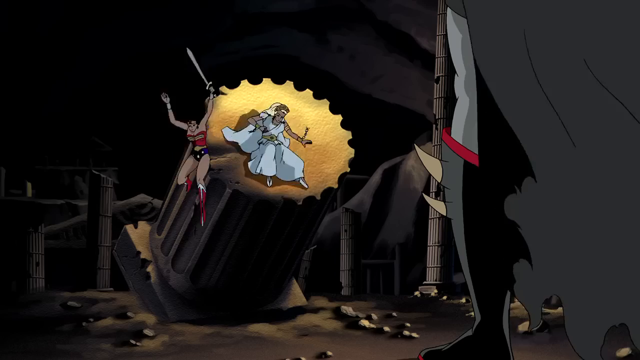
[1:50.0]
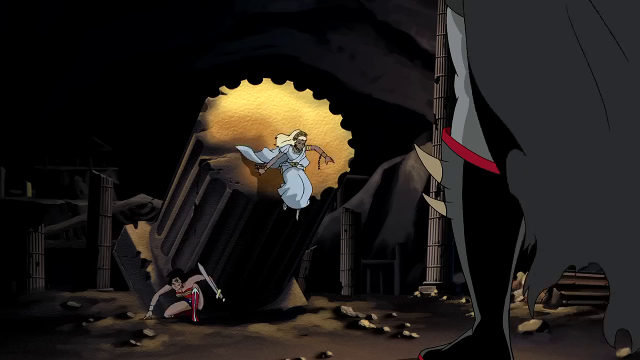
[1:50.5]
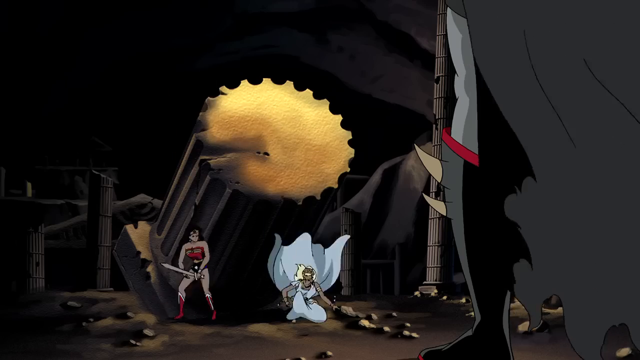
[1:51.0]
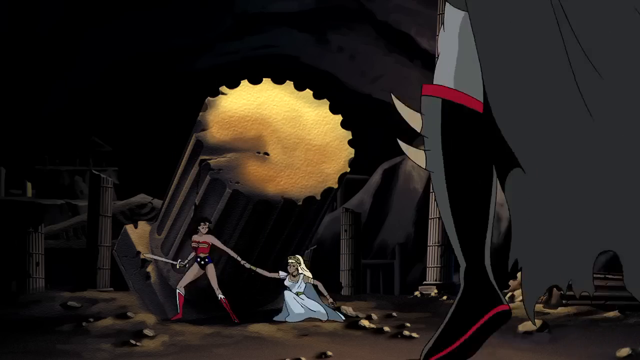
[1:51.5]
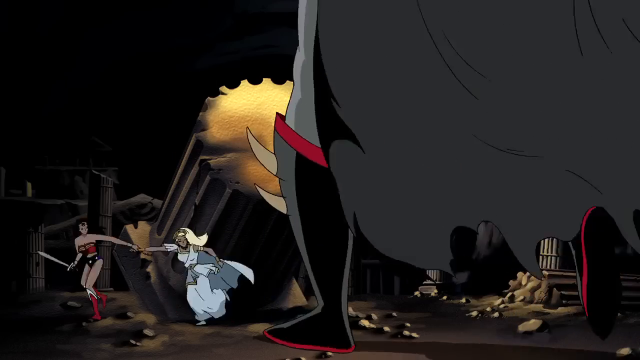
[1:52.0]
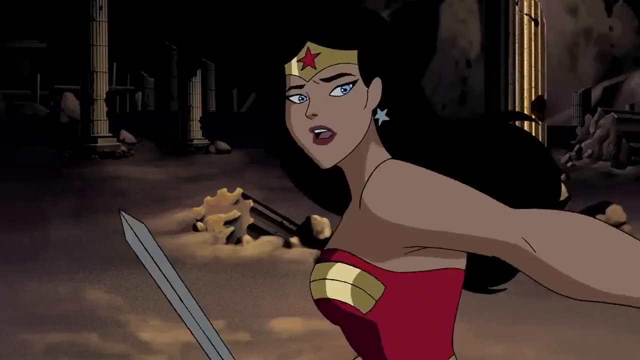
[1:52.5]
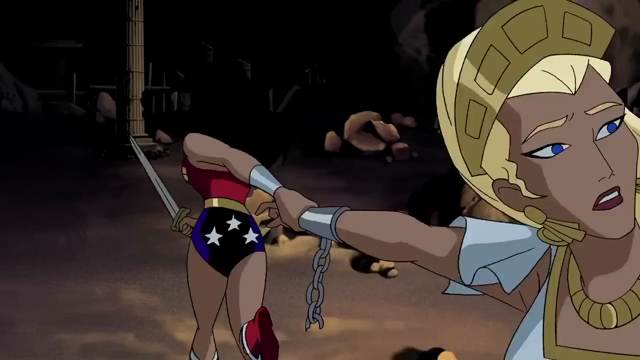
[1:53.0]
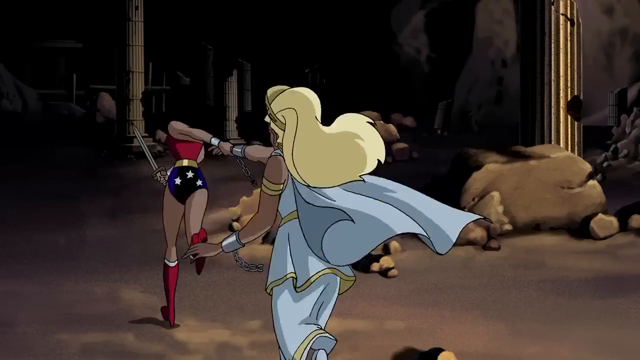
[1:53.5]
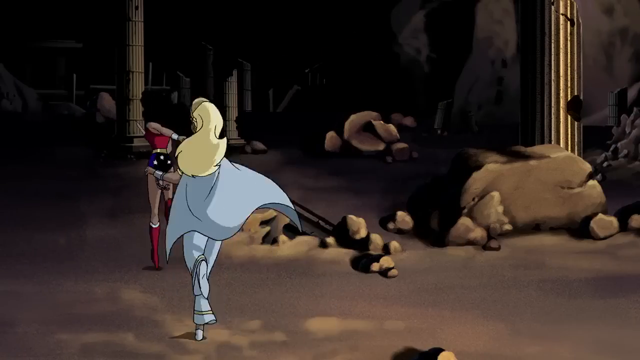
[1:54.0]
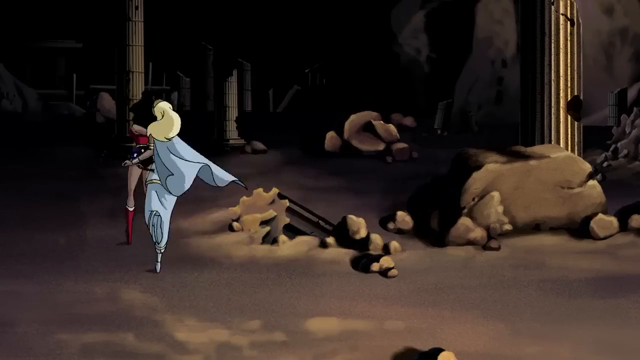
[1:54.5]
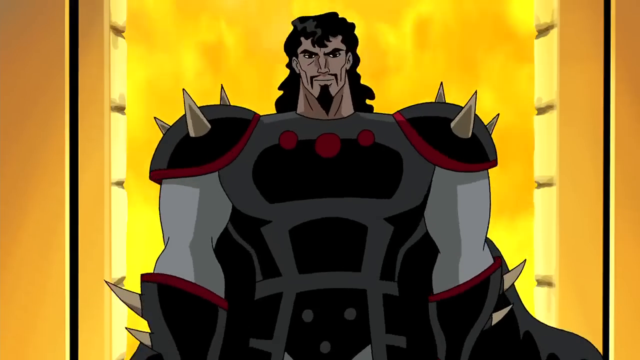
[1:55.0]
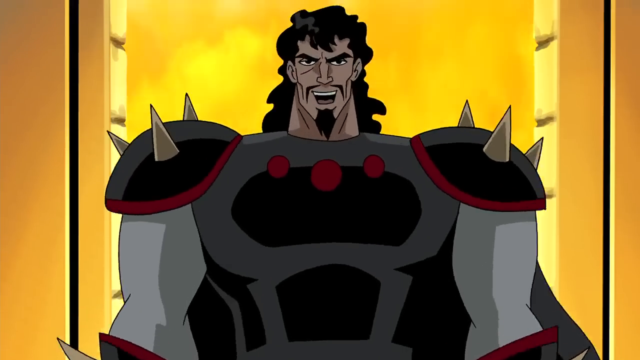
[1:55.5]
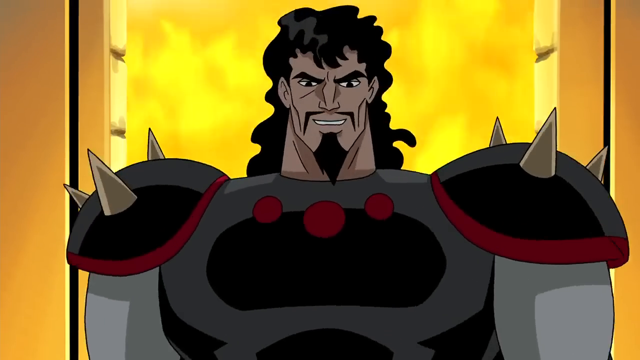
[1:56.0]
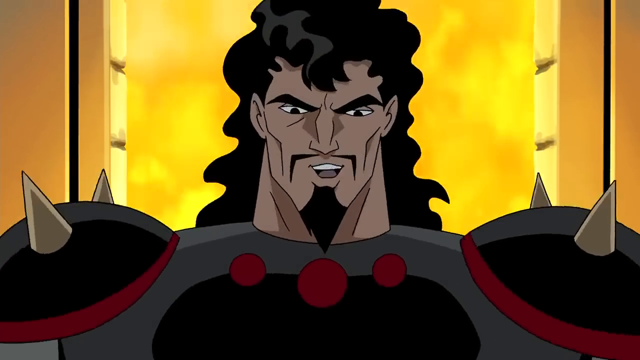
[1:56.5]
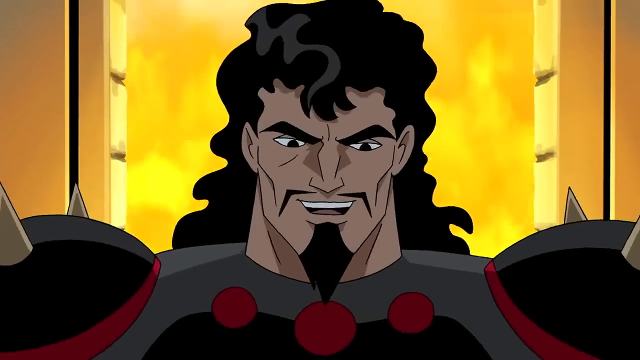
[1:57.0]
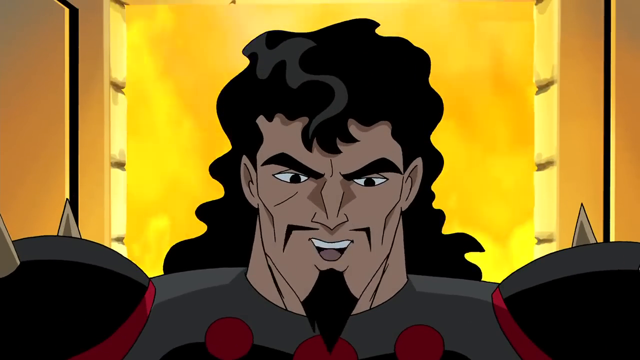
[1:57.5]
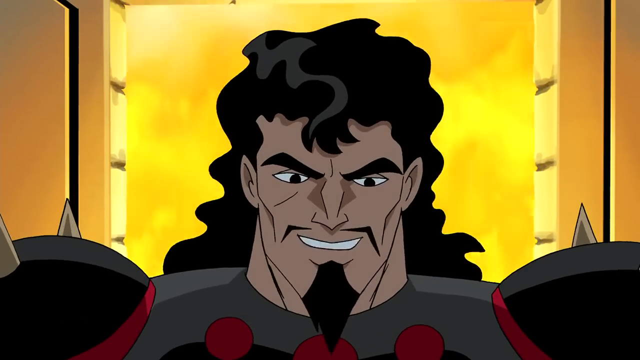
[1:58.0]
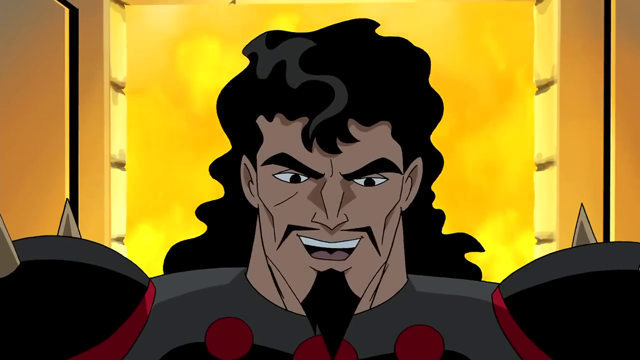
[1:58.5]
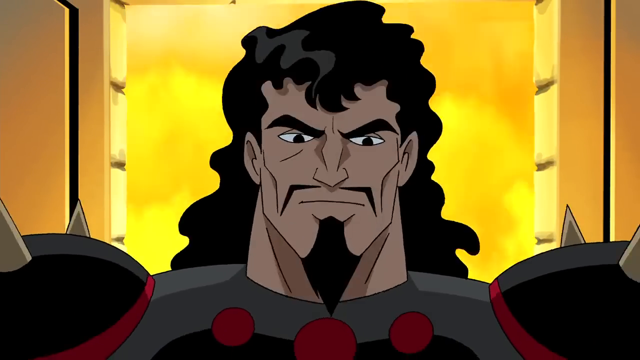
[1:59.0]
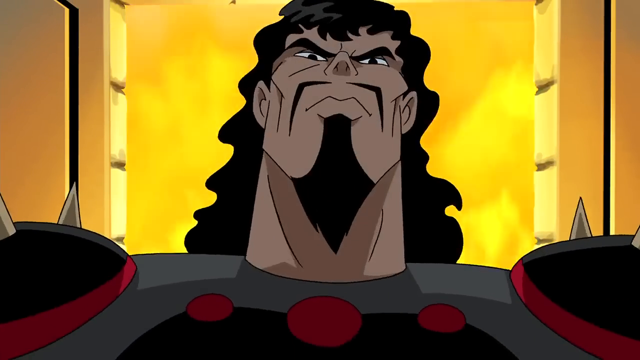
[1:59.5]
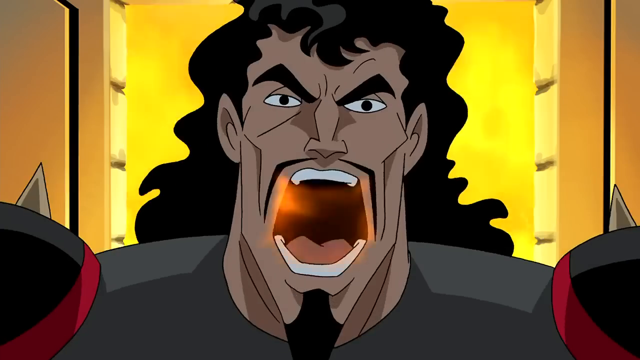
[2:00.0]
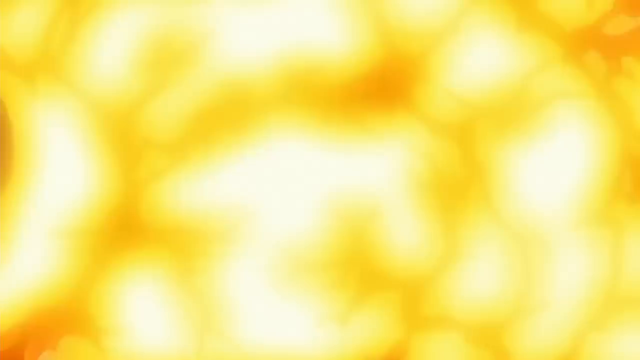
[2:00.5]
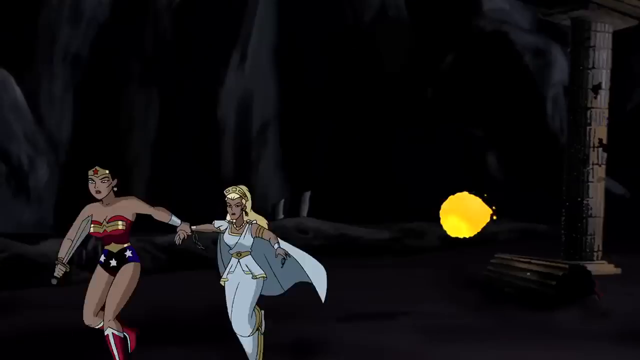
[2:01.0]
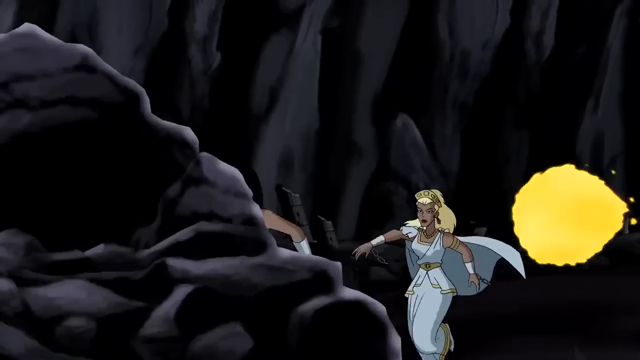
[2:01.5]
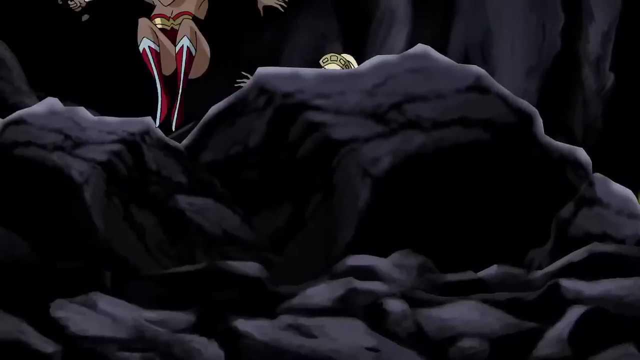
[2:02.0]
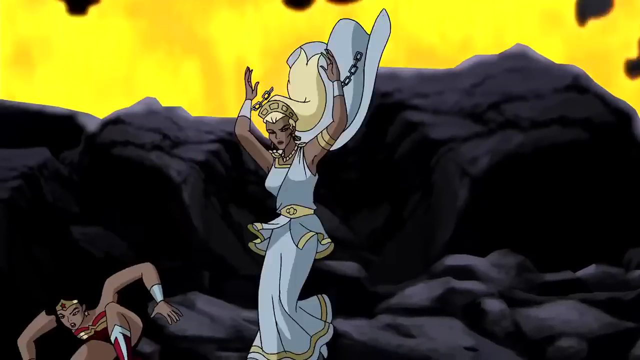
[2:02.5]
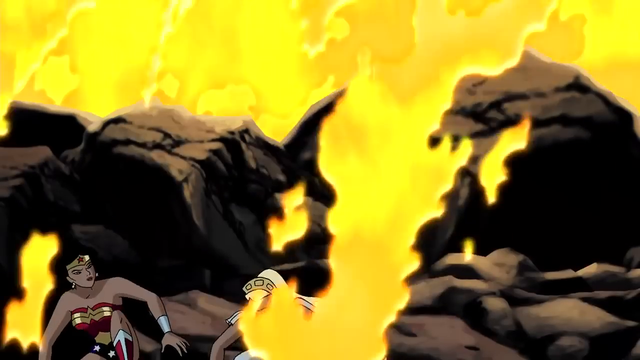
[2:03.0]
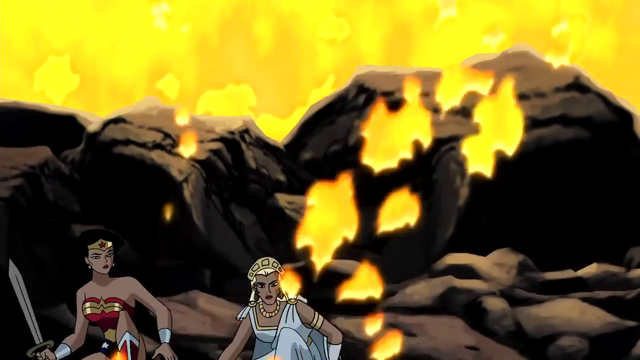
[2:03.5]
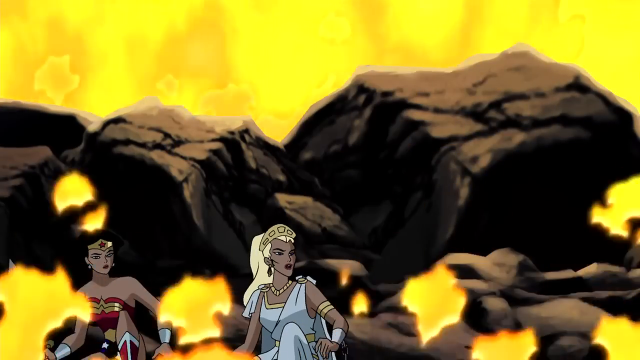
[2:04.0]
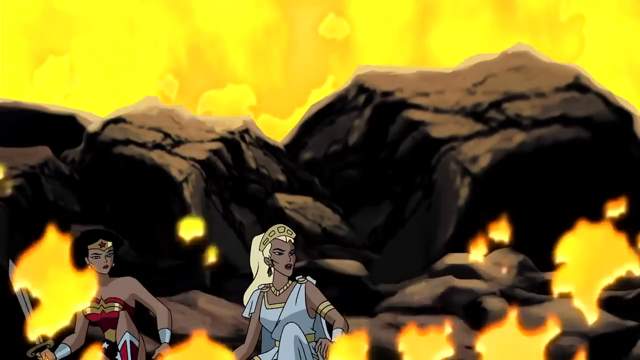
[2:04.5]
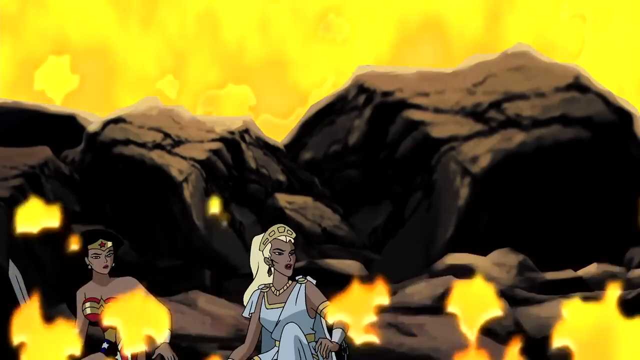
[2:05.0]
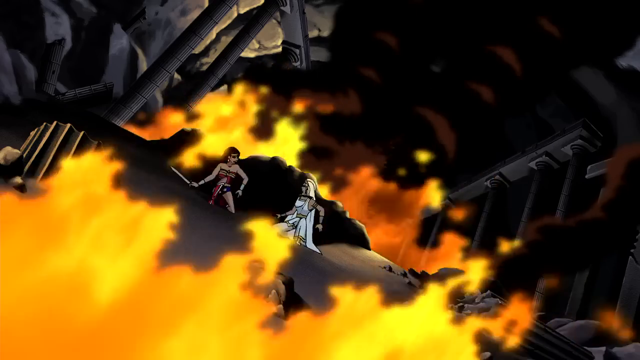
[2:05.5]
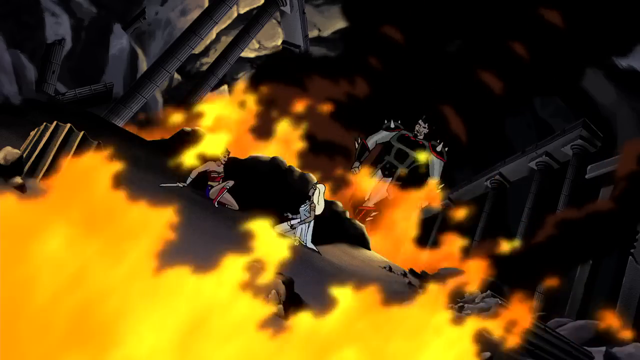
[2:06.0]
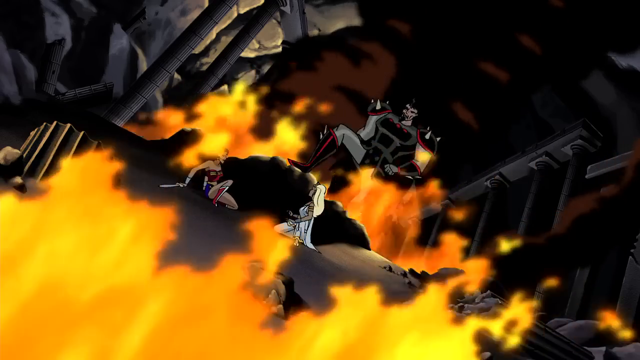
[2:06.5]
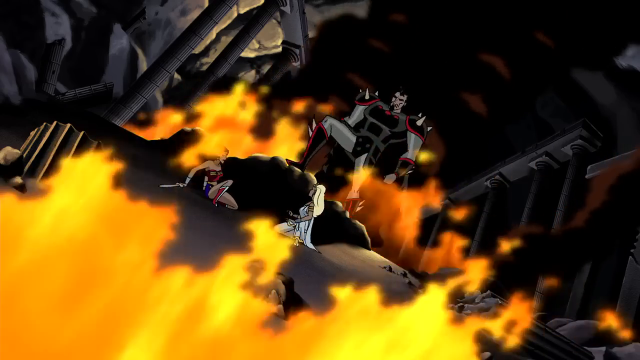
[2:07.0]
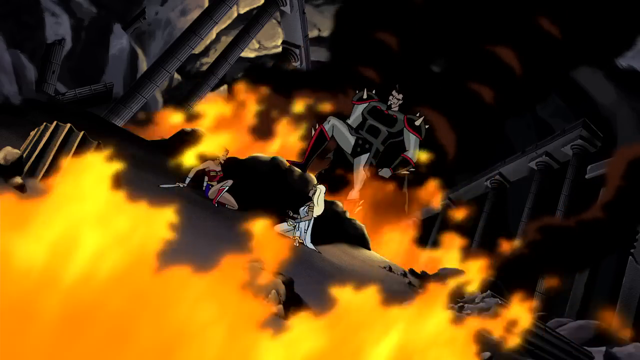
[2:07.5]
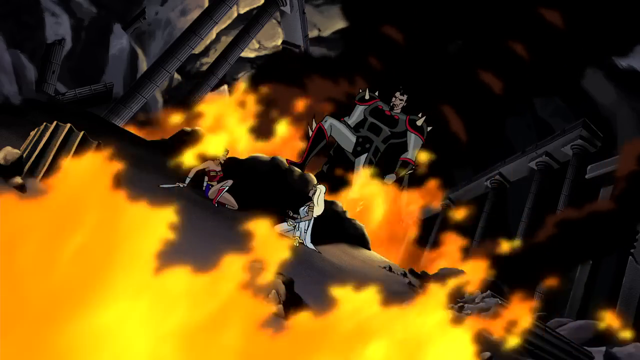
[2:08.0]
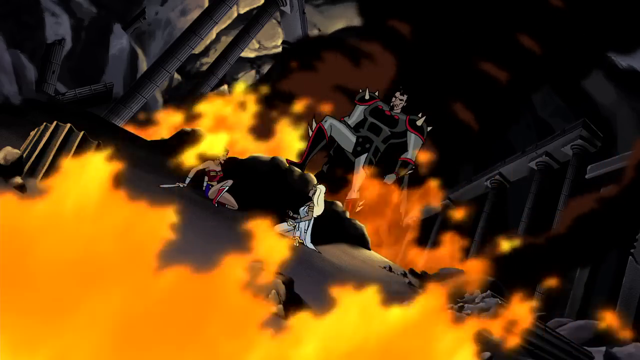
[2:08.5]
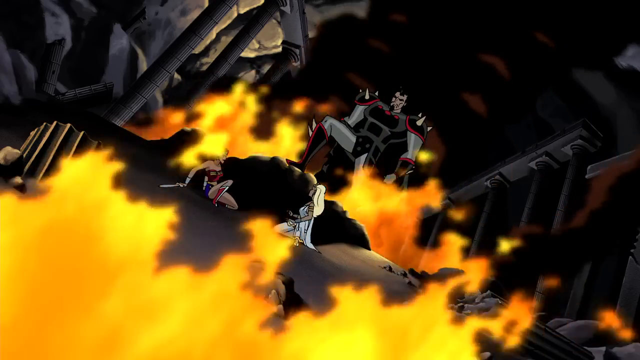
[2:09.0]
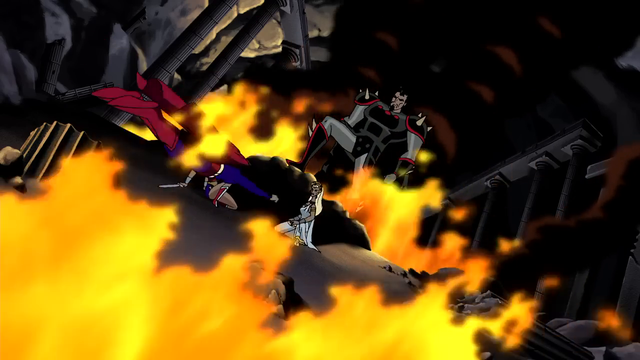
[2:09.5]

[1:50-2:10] The woman who was tied to the top of the overturned column has been cut away from the chains by Wonder Woman. Wonder Woman flies down to the ground, still holding her sword in her left hand. Her left arm is up above her head, and her right arm is also above her head but bent at the elbow, with the hand slightly back and the palm face up. Wonder Woman lands on the ground, and the freed woman lands as well. Wonder Woman grabs the woman's right hand with her left hand, and they run out of the dungeon, stopping behind some large boulders. Fire blazes all around them, and the large man in the gray, black and red outfit stands over them.